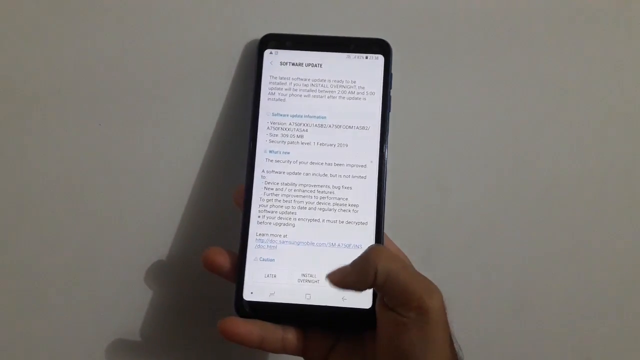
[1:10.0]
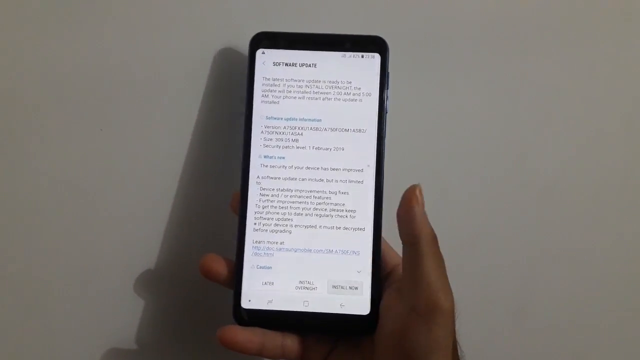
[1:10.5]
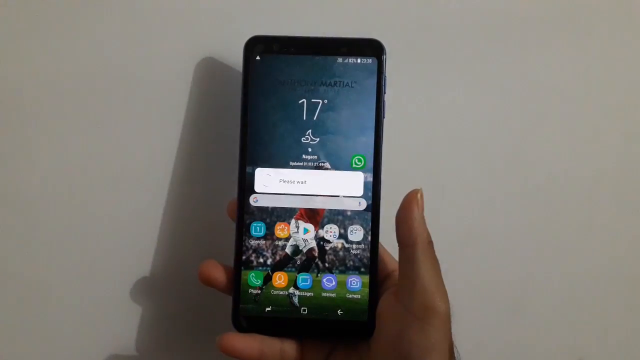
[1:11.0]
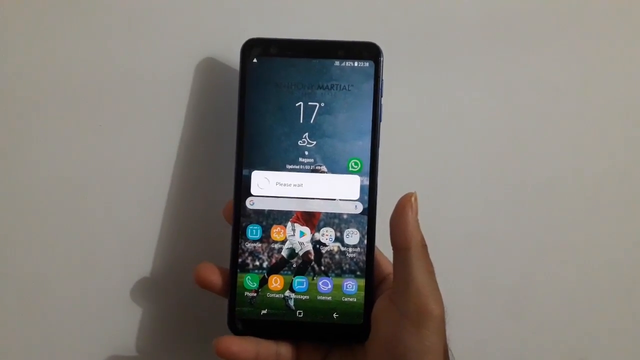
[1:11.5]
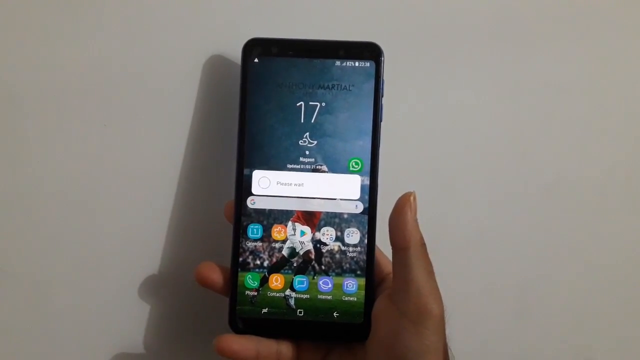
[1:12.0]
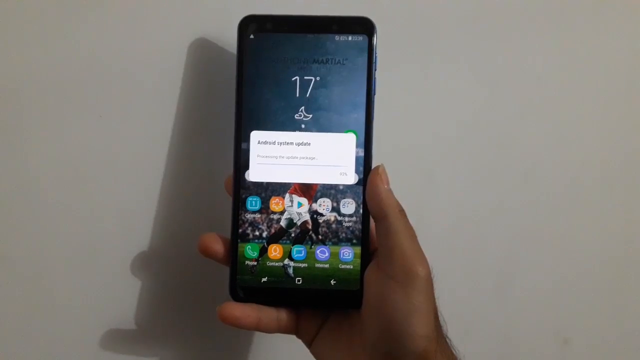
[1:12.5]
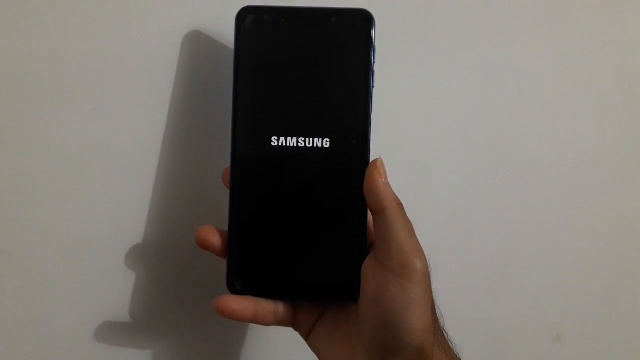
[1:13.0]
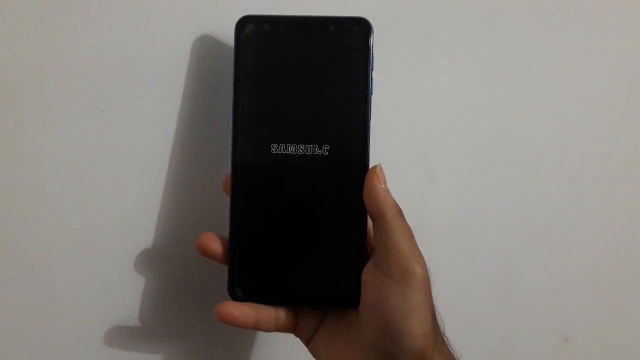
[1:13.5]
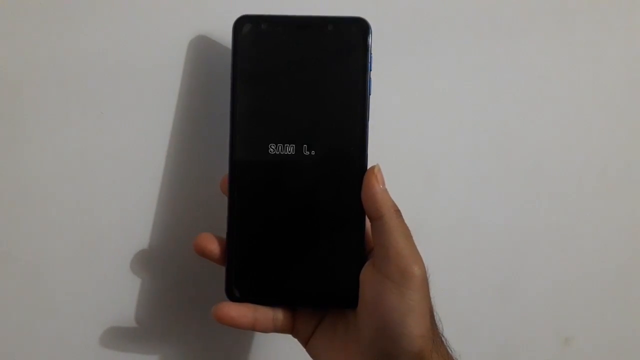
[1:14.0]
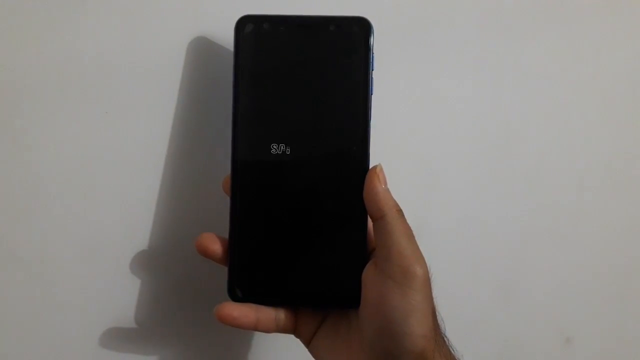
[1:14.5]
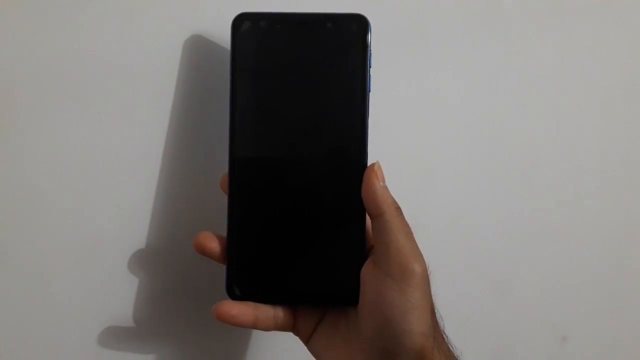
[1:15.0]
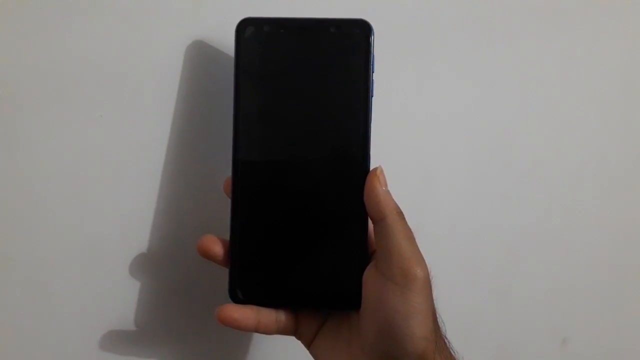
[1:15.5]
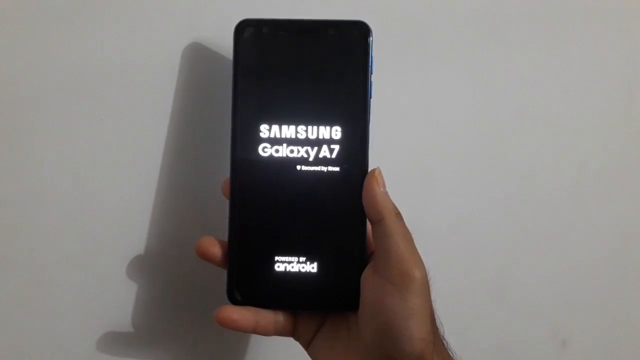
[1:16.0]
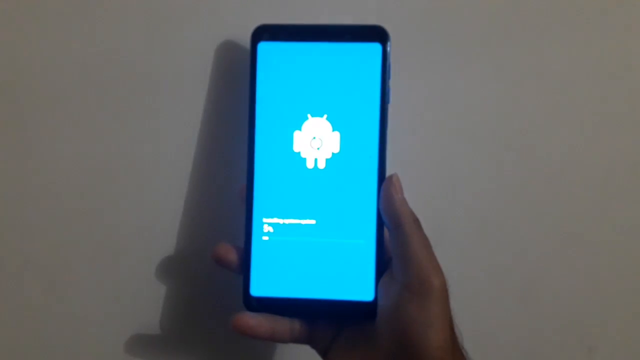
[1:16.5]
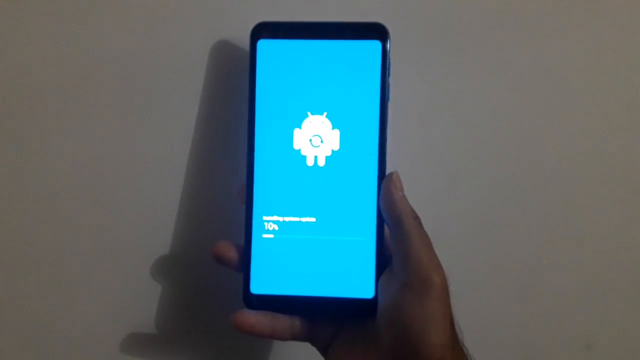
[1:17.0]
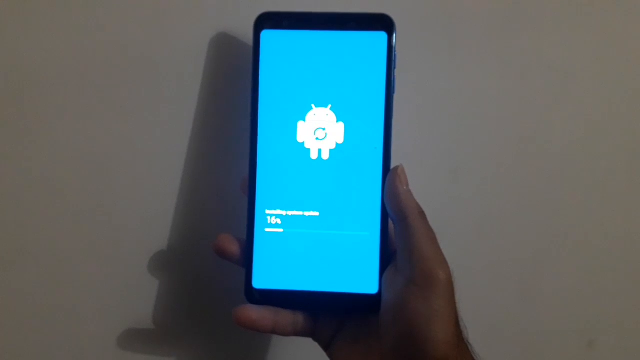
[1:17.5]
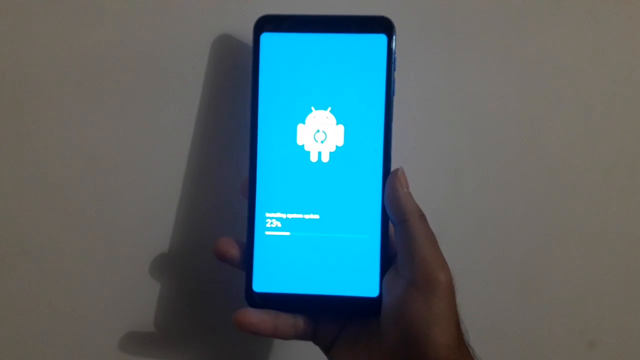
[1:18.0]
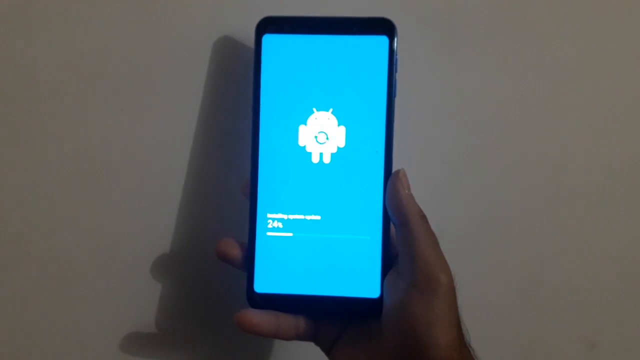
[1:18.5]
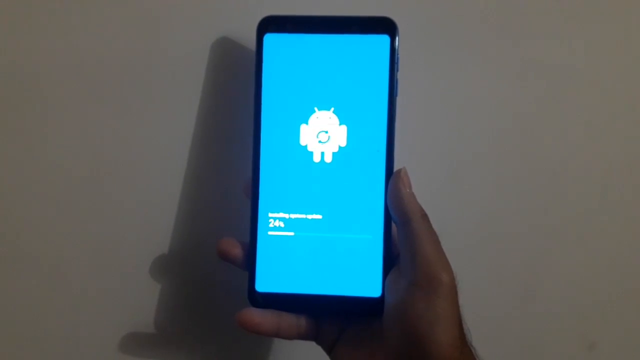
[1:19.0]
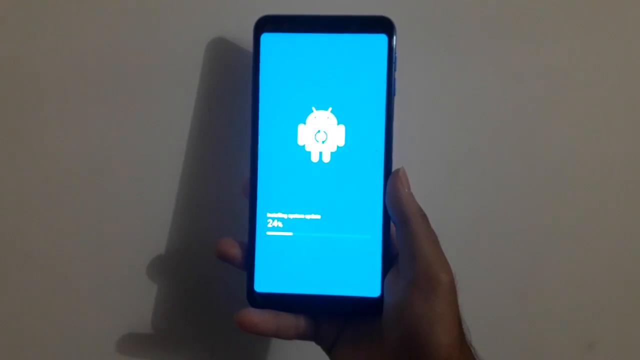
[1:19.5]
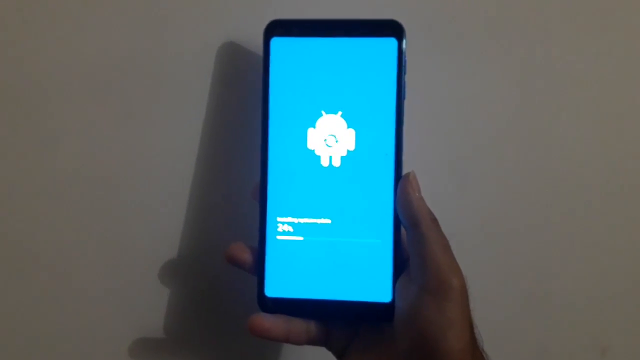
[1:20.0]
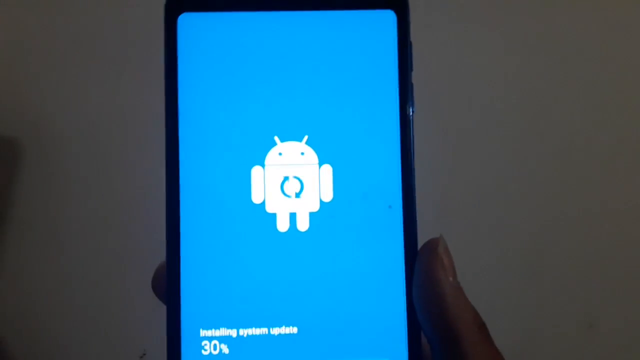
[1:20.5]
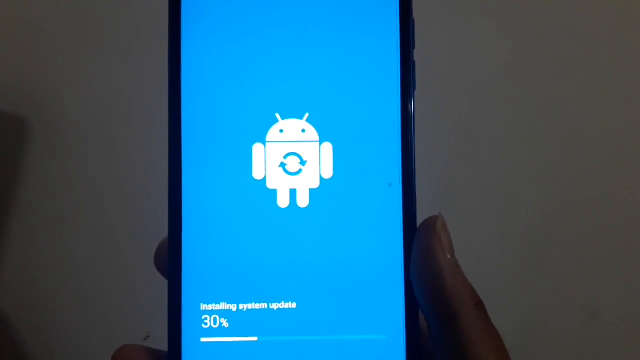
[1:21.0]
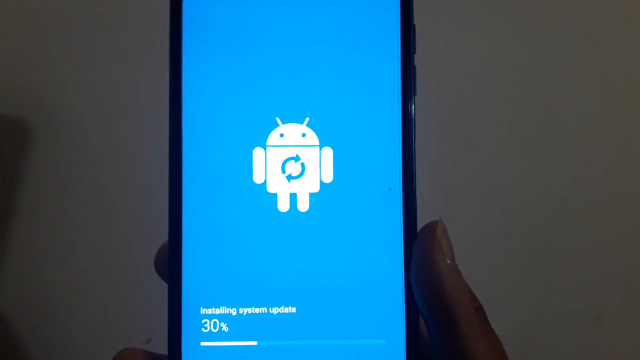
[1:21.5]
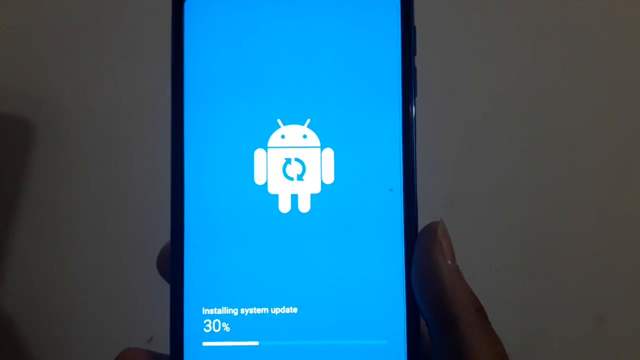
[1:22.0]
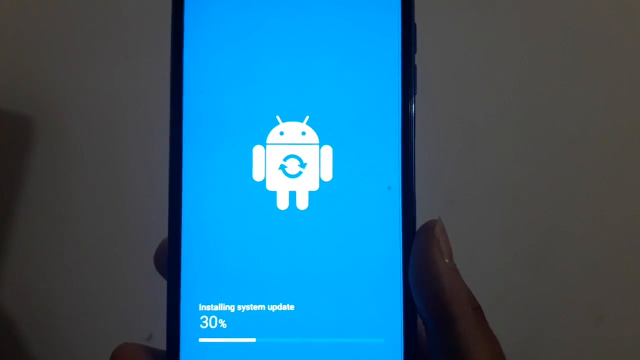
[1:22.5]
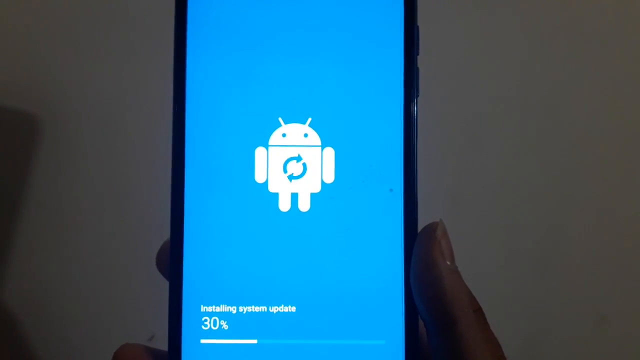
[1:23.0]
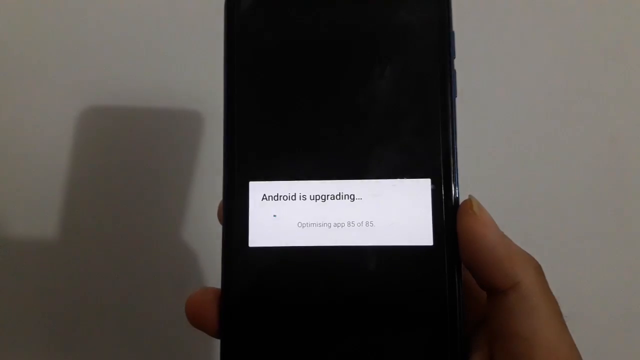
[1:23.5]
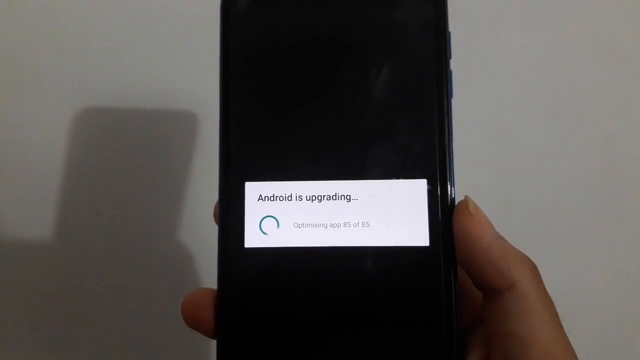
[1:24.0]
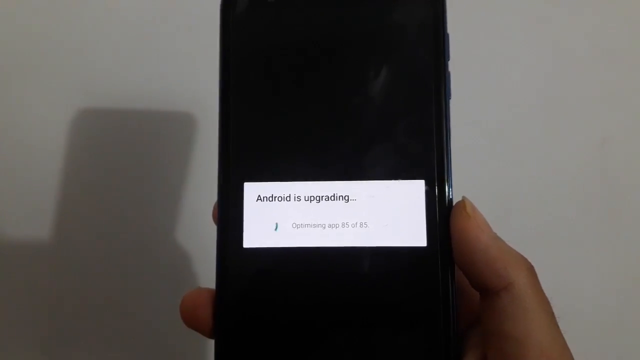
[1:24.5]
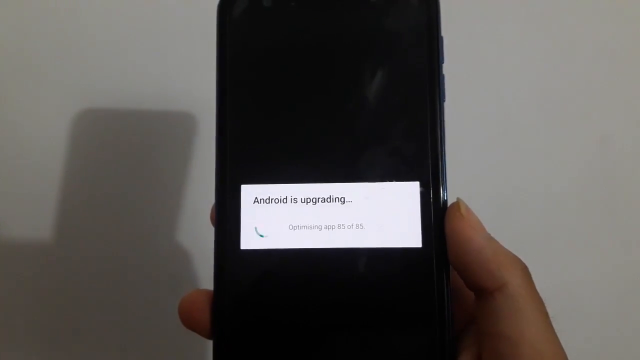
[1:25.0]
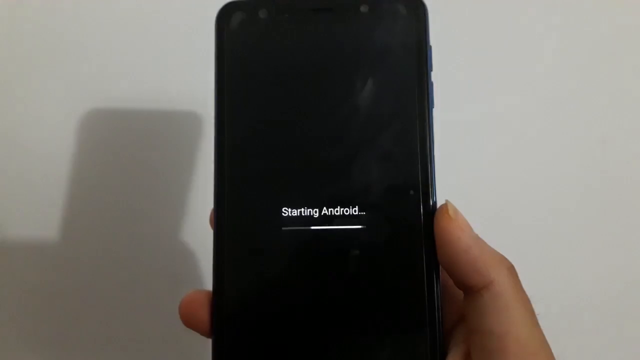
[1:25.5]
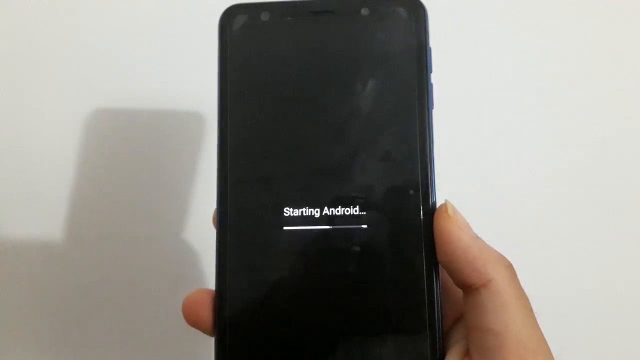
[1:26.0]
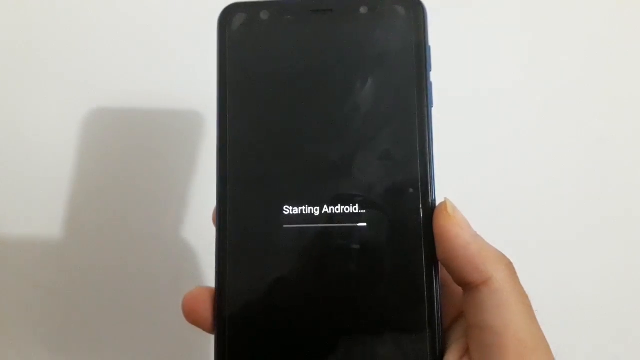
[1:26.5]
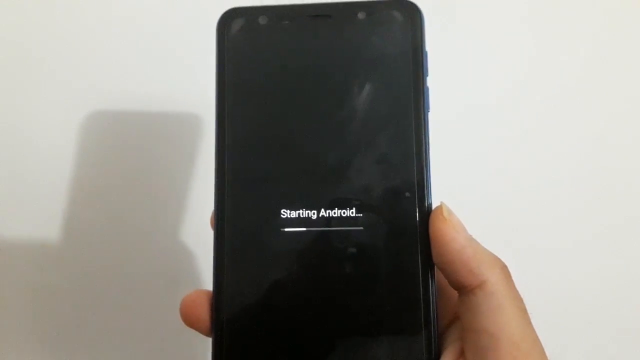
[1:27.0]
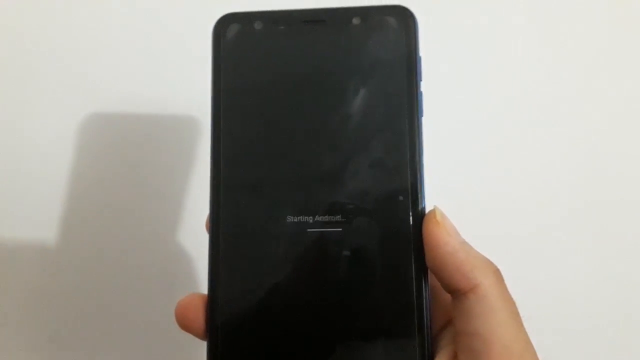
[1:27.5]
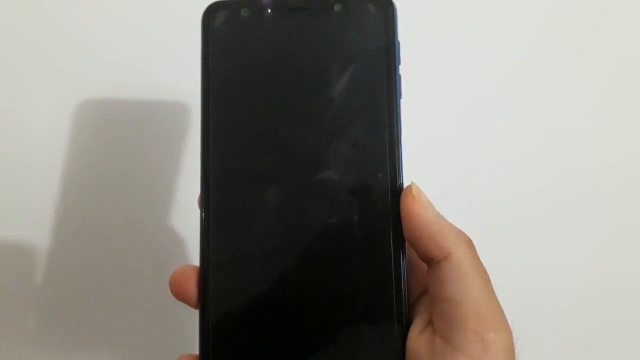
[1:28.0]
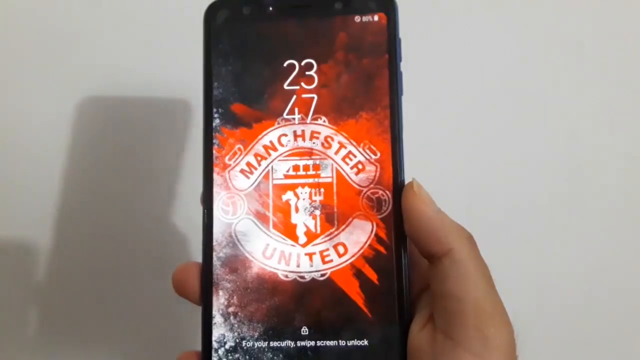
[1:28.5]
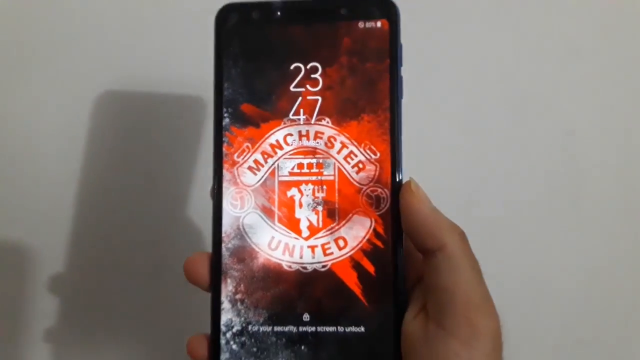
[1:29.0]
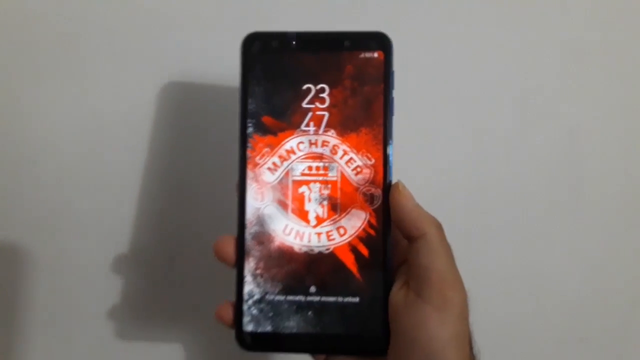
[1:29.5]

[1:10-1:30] A woman holds a Samsung phone in the palm of her right hand, between two fingers and her thumb. She clicks on the phone and it shows "17 degrees." A cursor pops up, and a picture of a sports person appears, possibly a soccer player, wearing white shorts and a red top. She quickly turns off the phone, and the Samsung sign disappears from right to left. She turns it back on and it says "Galaxy A7." A little icon appears that looks like a little computer guy with a cursor going in his belly, and the screen says "starting Android." Her screensaver is a Manchester sign.